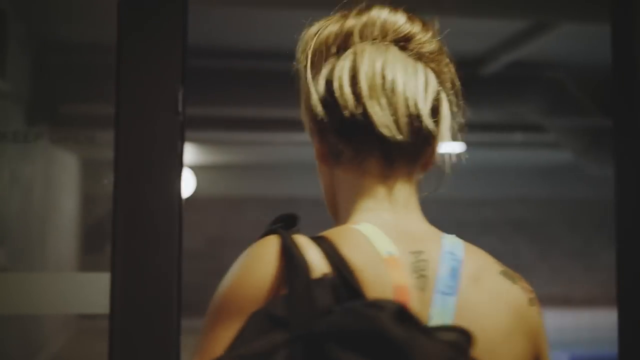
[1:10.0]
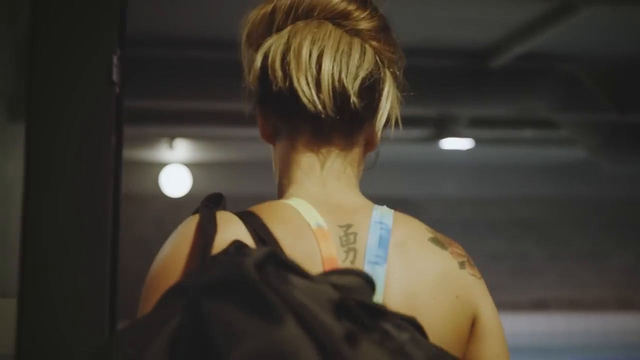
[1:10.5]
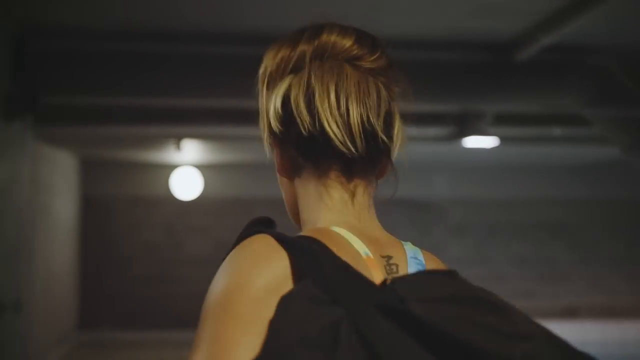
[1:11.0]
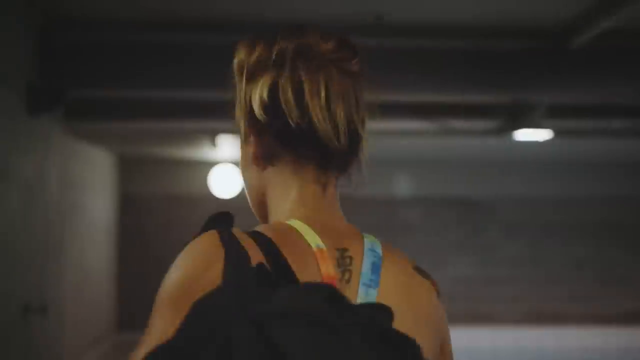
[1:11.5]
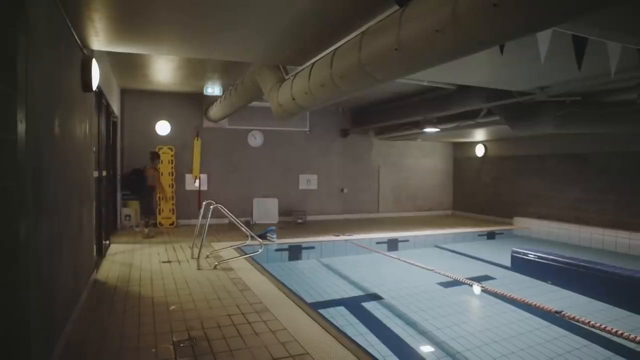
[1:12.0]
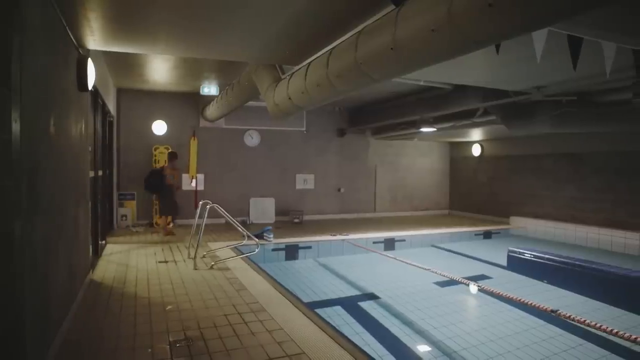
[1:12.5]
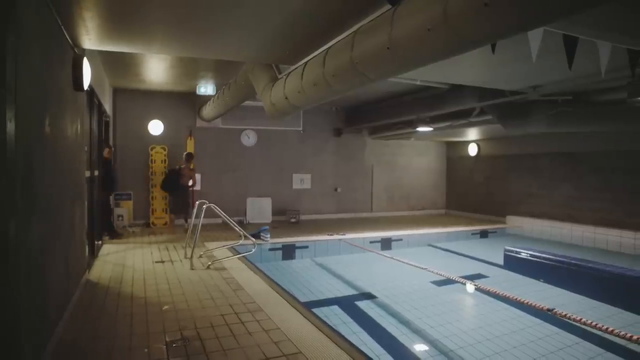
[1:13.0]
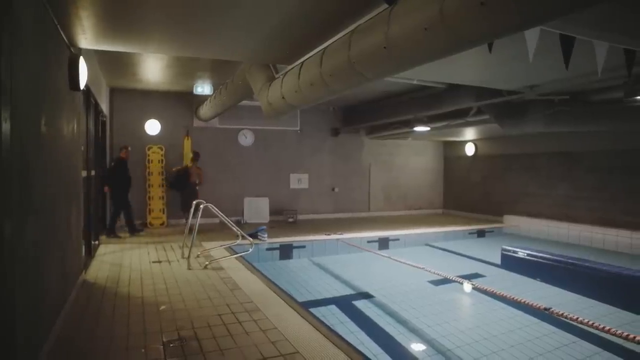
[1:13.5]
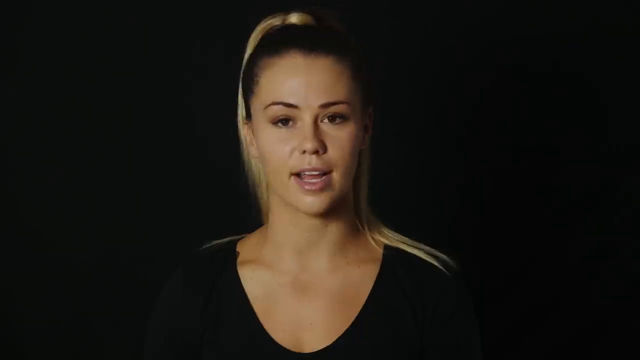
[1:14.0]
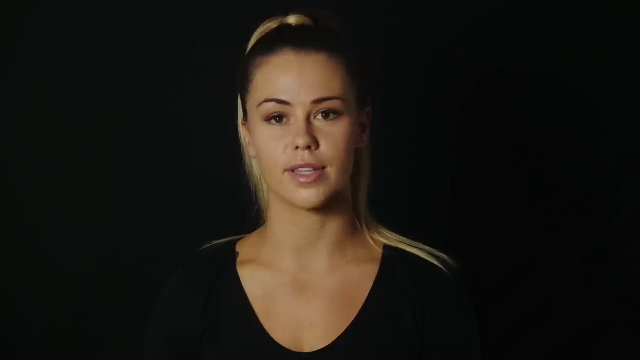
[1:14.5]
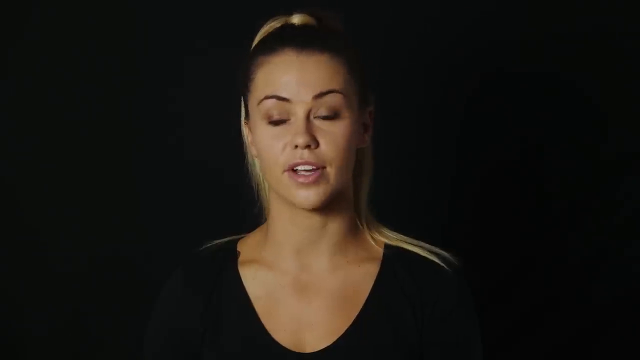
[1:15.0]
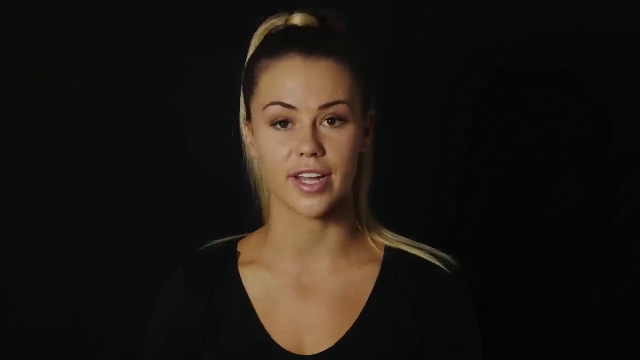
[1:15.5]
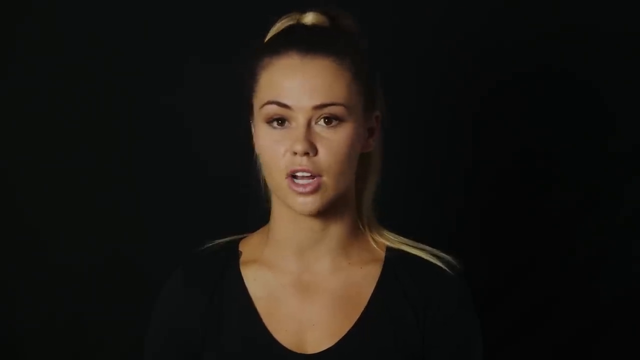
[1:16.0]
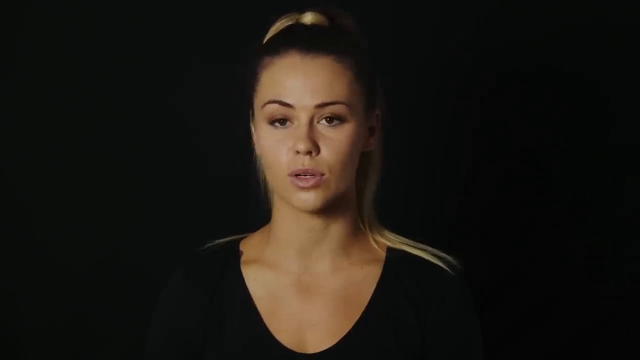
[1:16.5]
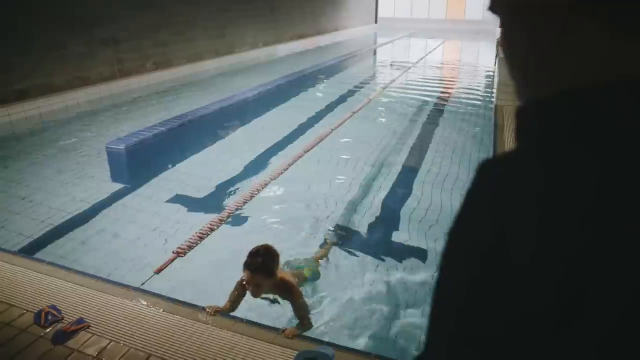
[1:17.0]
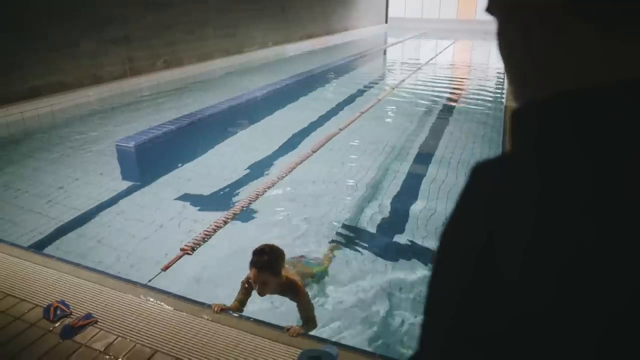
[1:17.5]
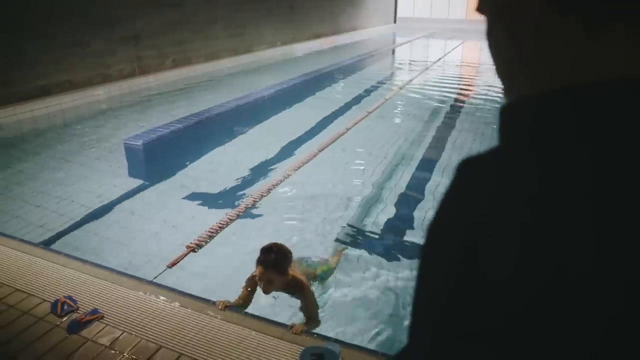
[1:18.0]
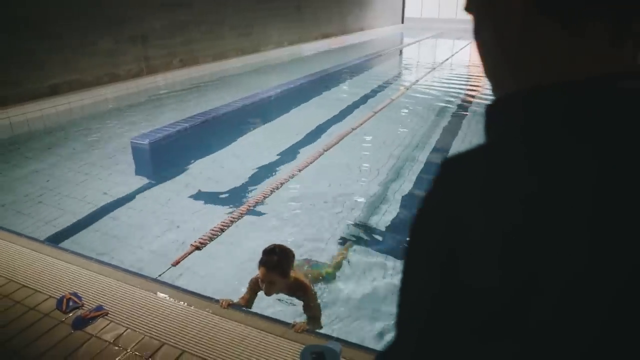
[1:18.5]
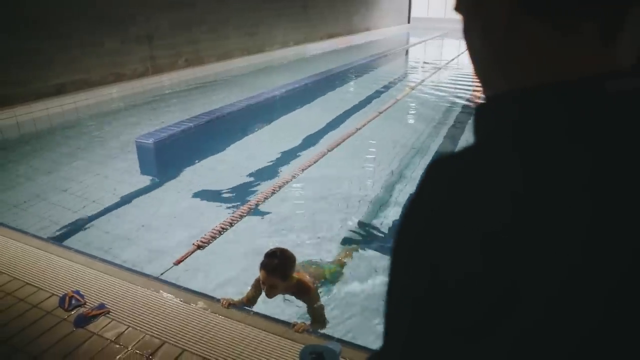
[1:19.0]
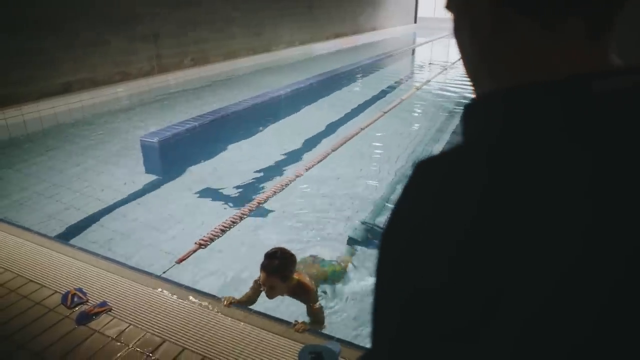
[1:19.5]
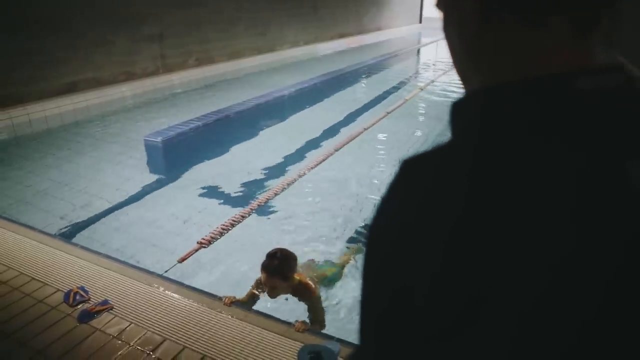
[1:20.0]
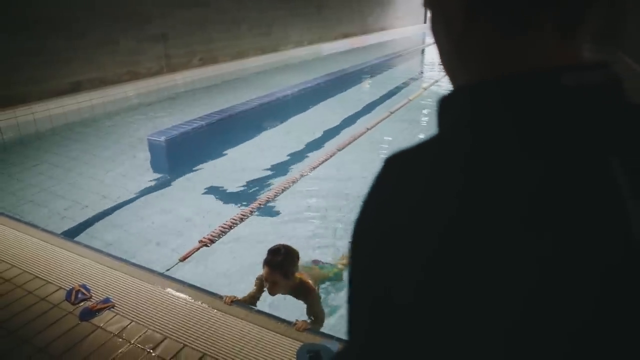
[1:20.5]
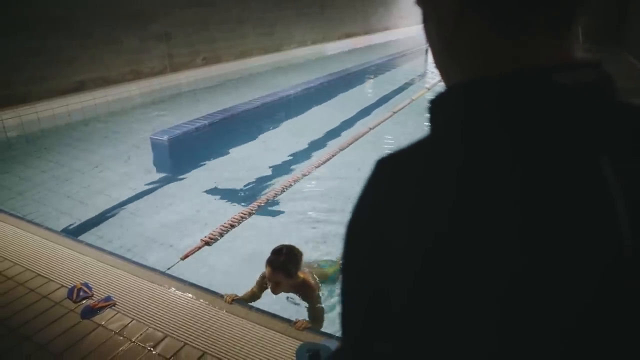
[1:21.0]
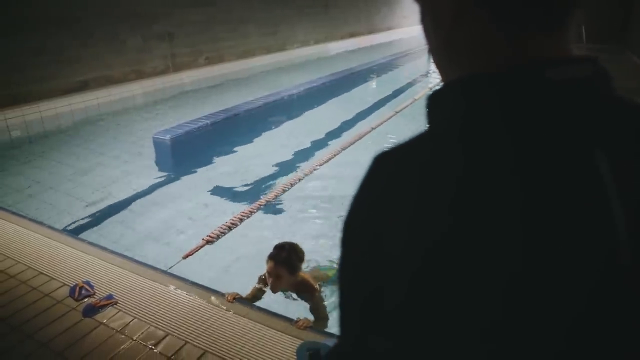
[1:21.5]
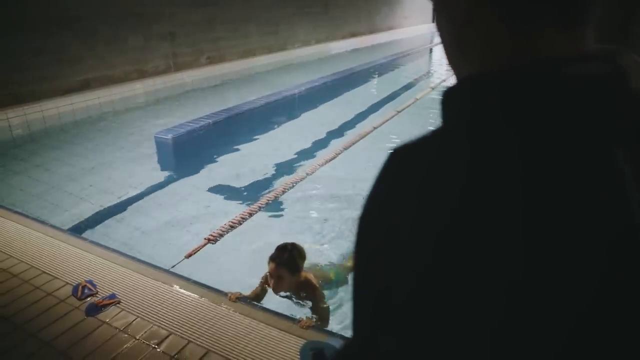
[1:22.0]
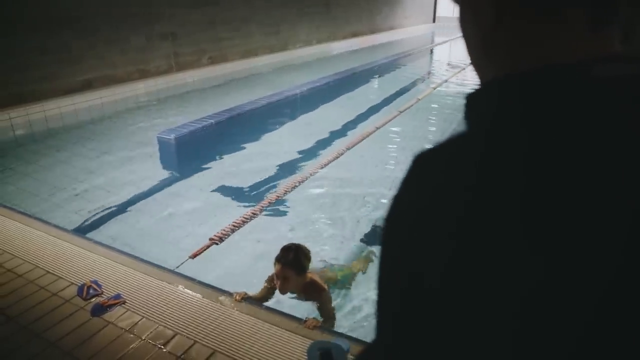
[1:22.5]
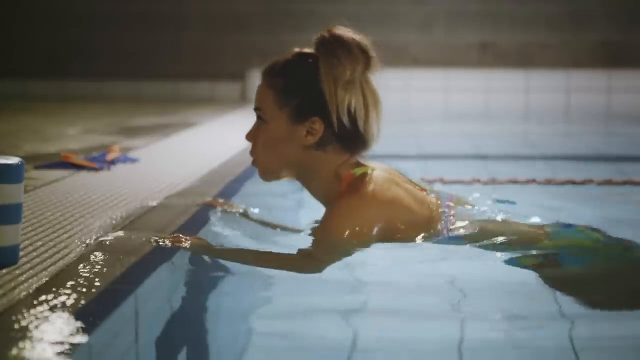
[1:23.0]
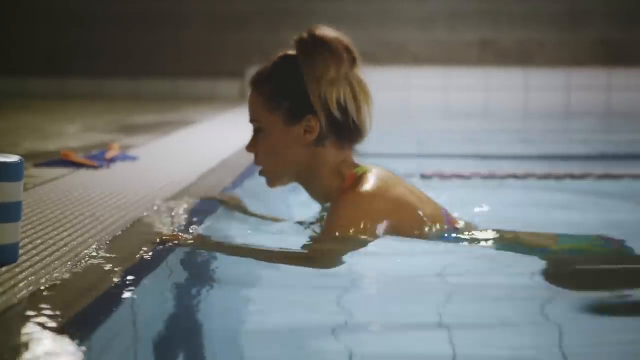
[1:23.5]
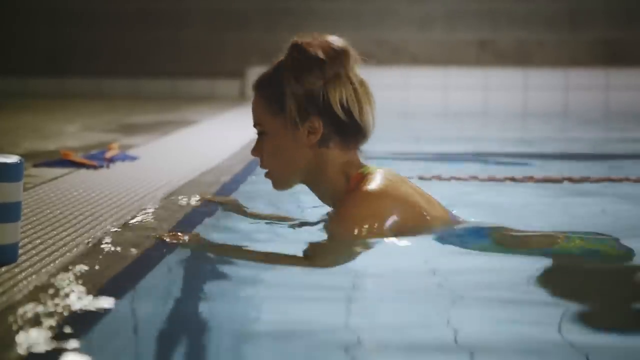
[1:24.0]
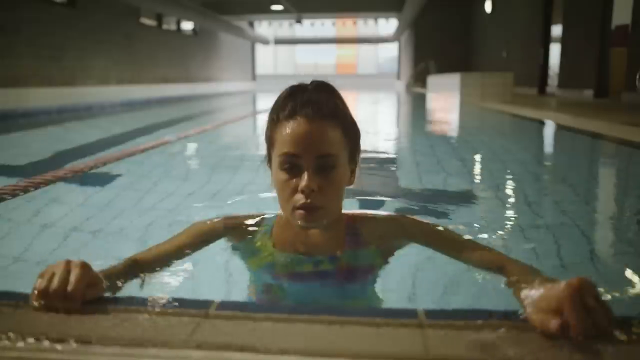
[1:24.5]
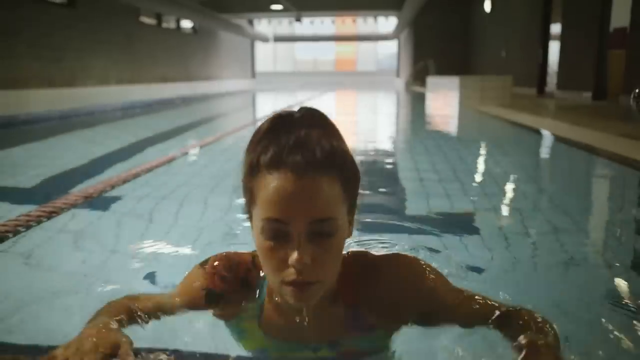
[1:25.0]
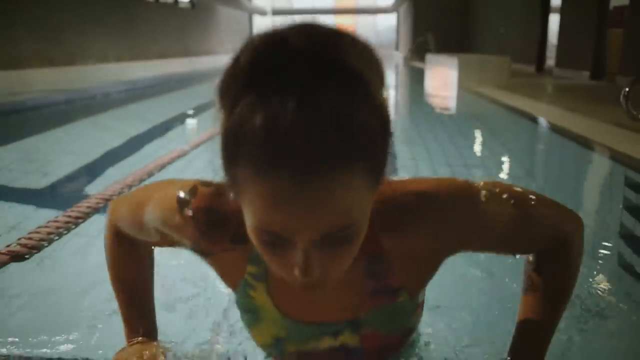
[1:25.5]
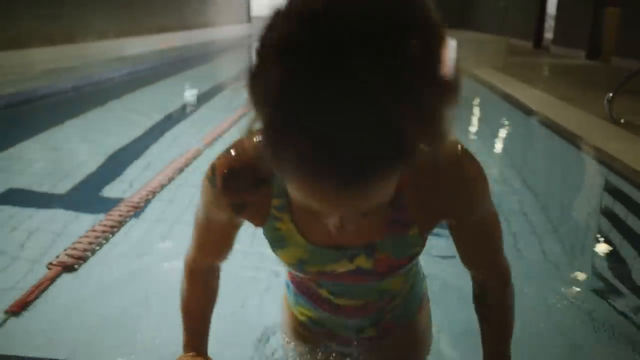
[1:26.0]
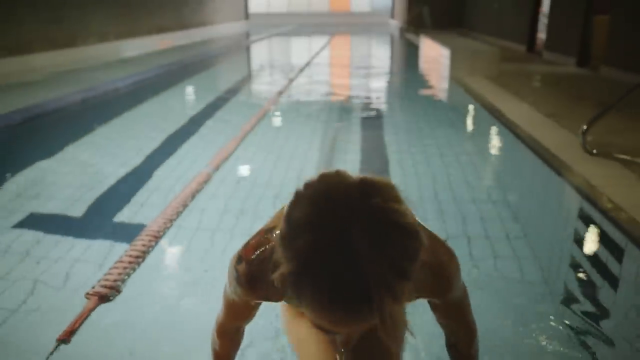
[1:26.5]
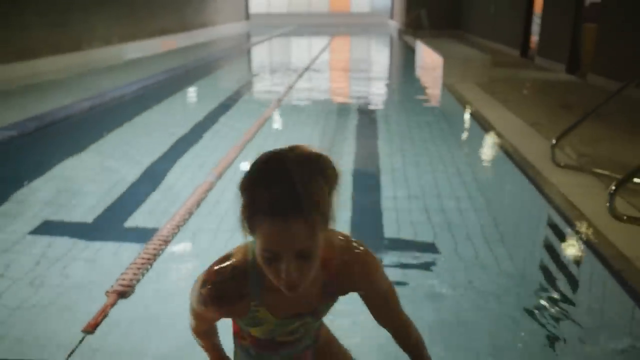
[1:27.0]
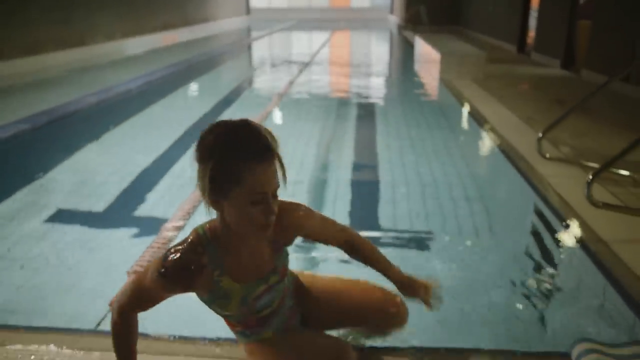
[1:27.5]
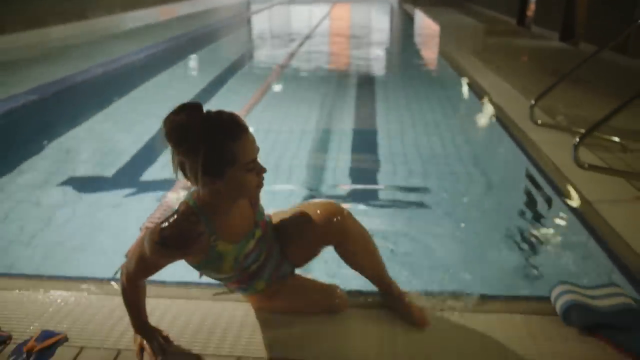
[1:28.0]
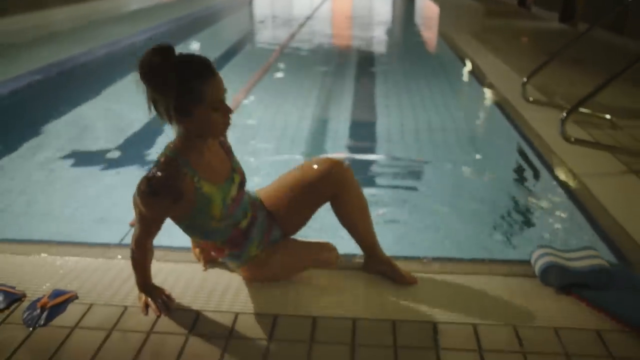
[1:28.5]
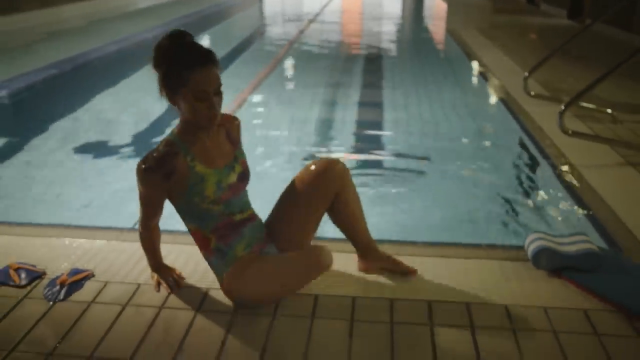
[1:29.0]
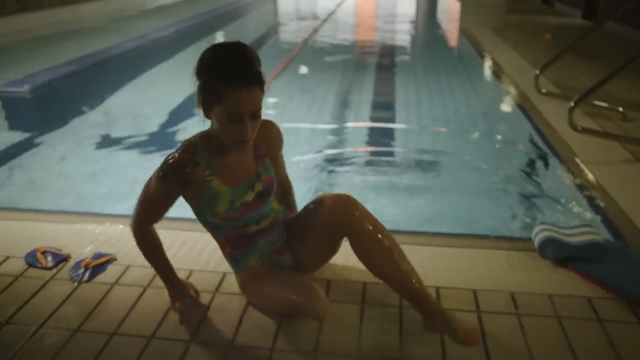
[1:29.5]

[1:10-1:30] A young woman walks into a room with an indoor swimming pool. The scene briefly switches to a young woman being interviewed, sitting down in front of a black backdrop. She wears a black shirt, her blonde hair is pulled into a ponytail, and she speaks to someone behind the camera. Then she is in the indoor swimming pool, holding on to the edge and kicking her legs behind her, shown from several angles including a close-up from the side. She pushes herself up with her arms and climbs out of the water, revealing that she is missing her leg below the right knee. She wears a multicolored one-piece bathing suit as she sits on the edge of the pool.